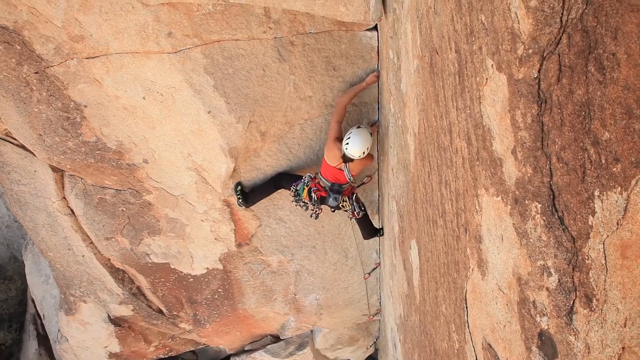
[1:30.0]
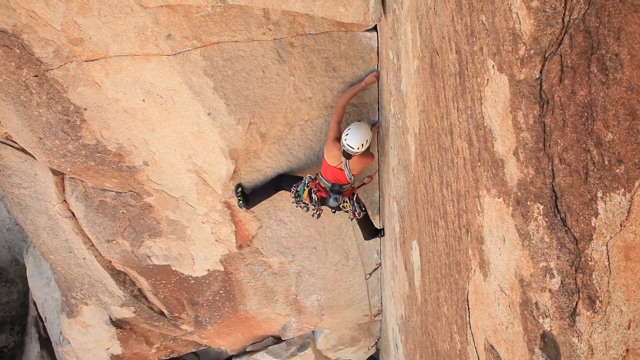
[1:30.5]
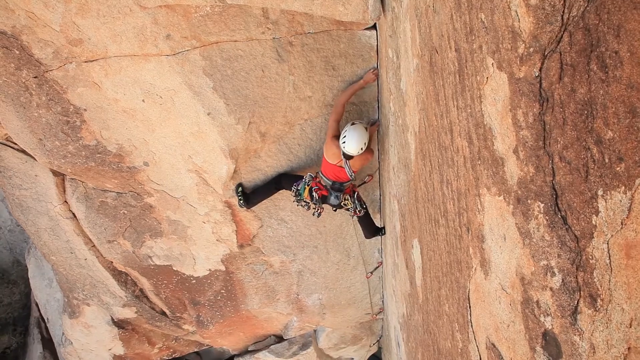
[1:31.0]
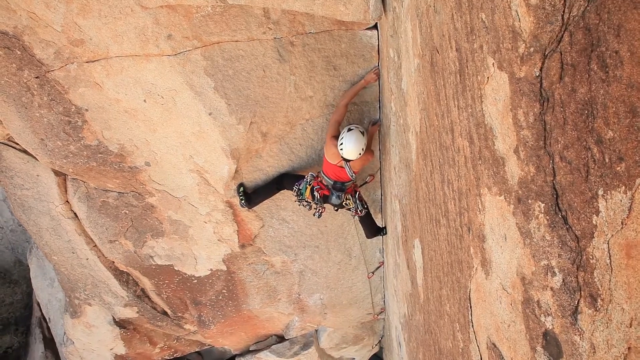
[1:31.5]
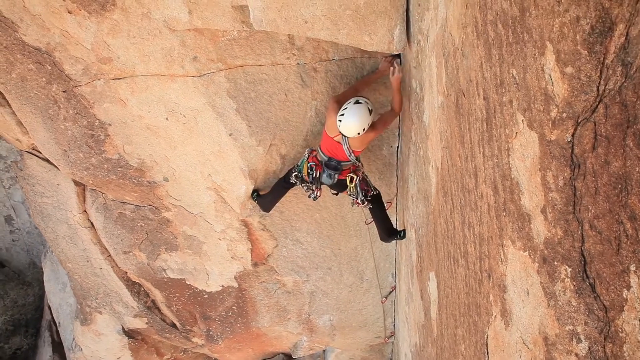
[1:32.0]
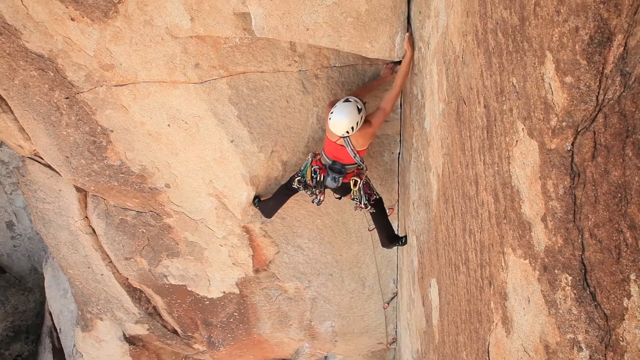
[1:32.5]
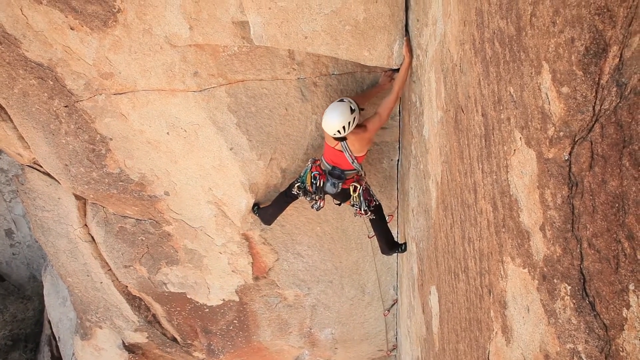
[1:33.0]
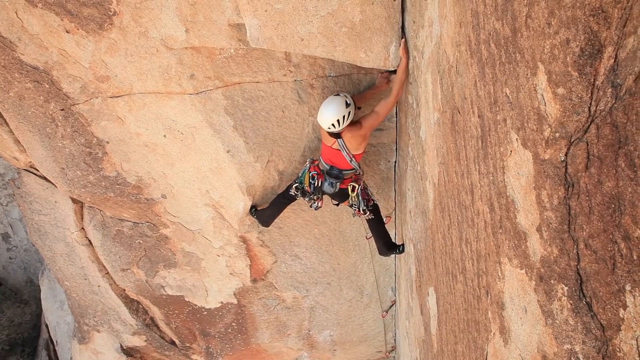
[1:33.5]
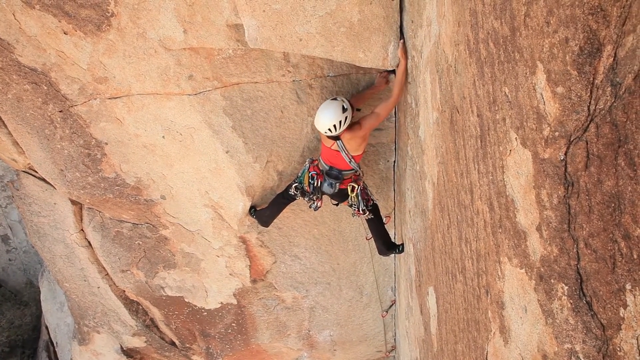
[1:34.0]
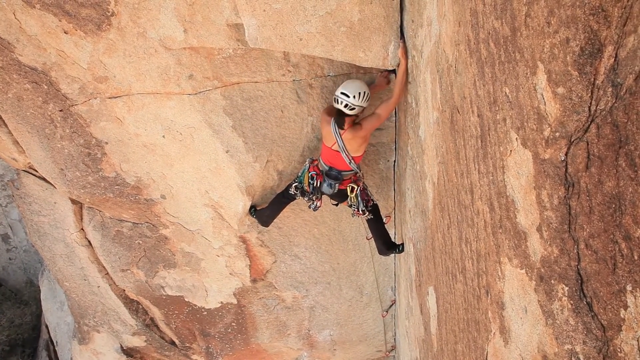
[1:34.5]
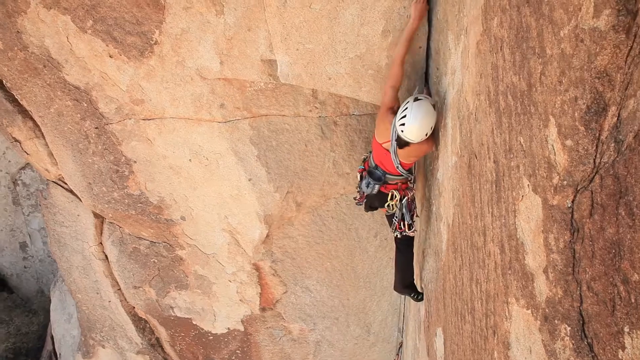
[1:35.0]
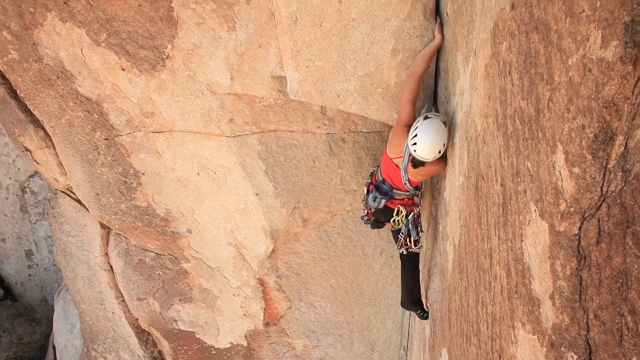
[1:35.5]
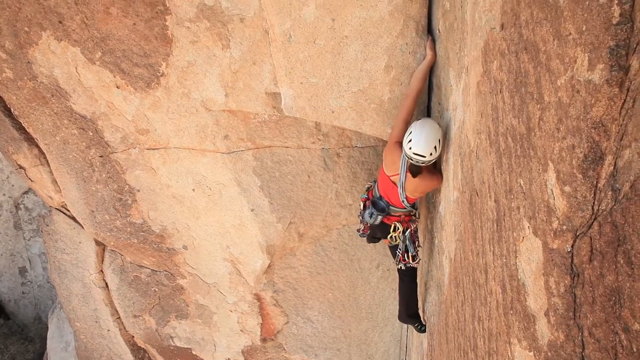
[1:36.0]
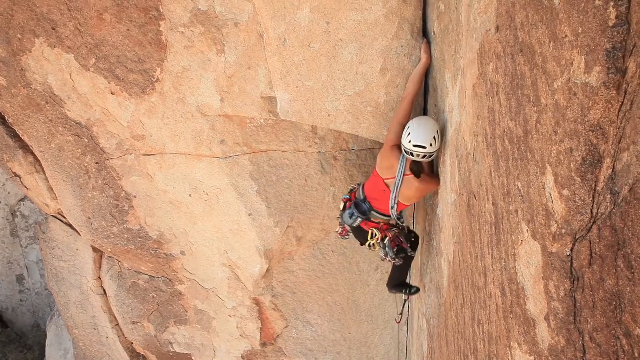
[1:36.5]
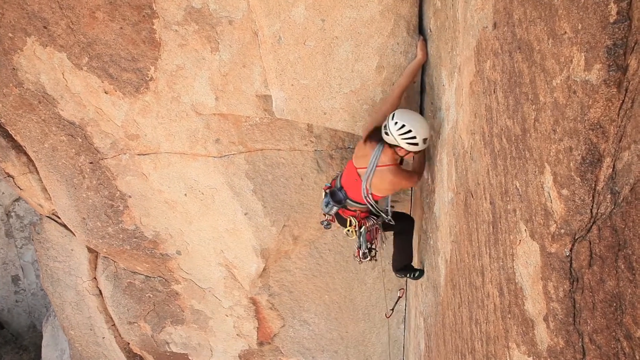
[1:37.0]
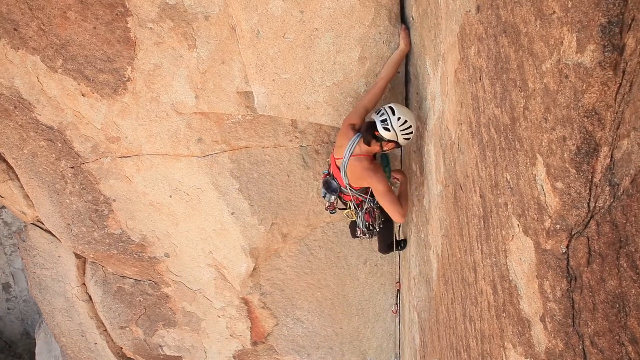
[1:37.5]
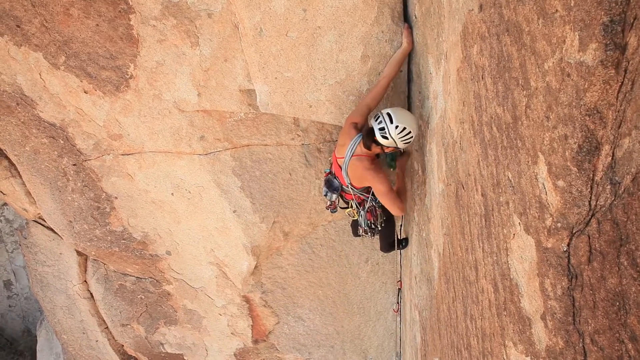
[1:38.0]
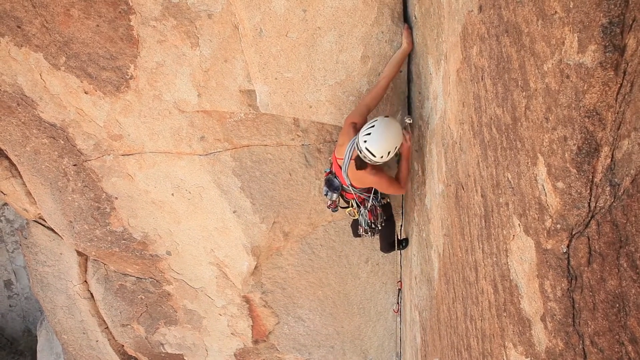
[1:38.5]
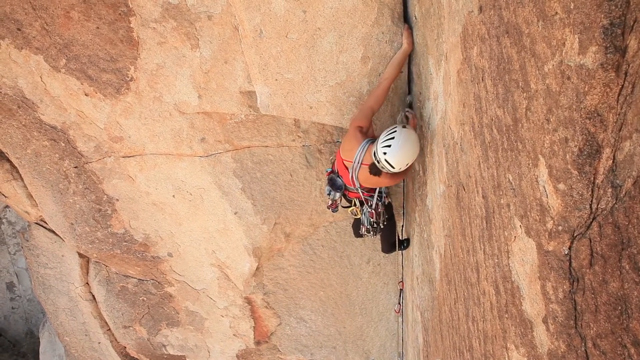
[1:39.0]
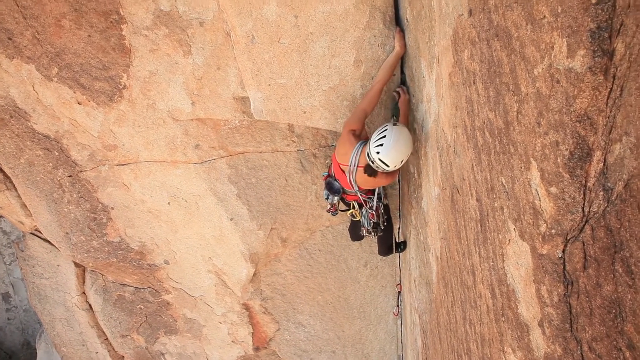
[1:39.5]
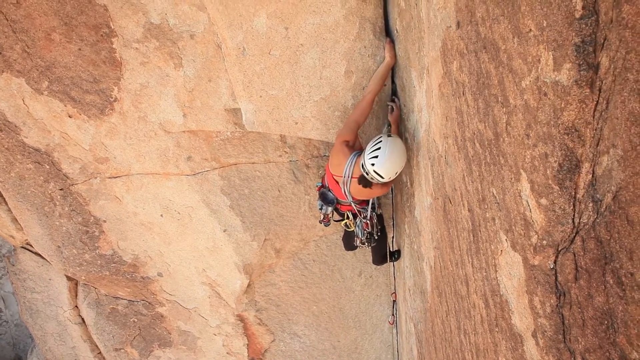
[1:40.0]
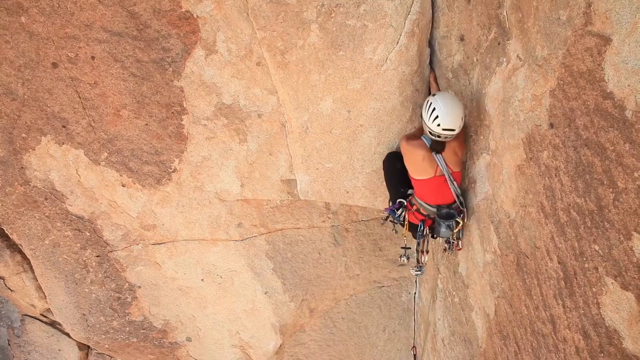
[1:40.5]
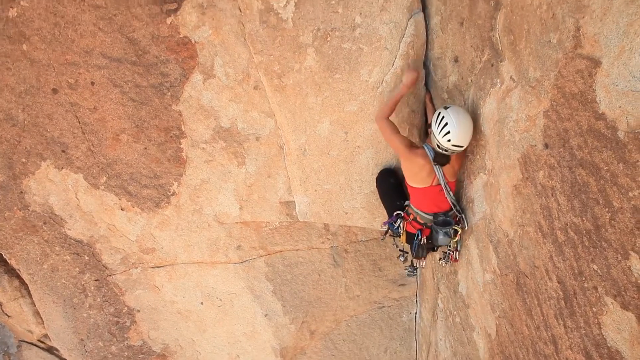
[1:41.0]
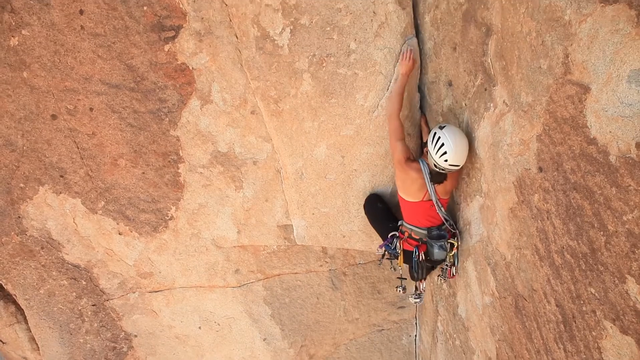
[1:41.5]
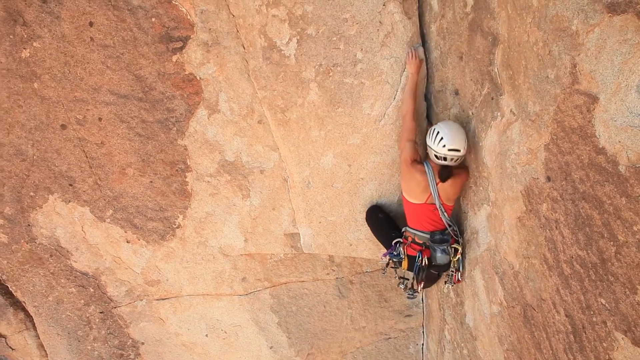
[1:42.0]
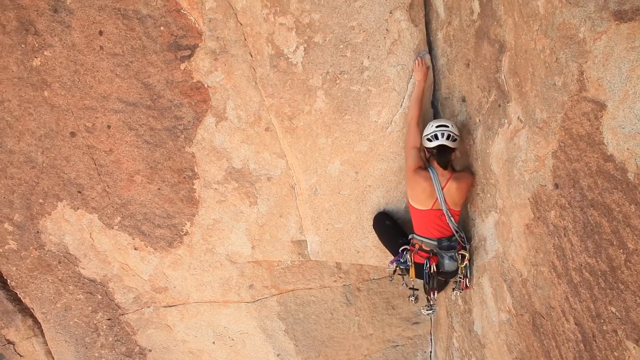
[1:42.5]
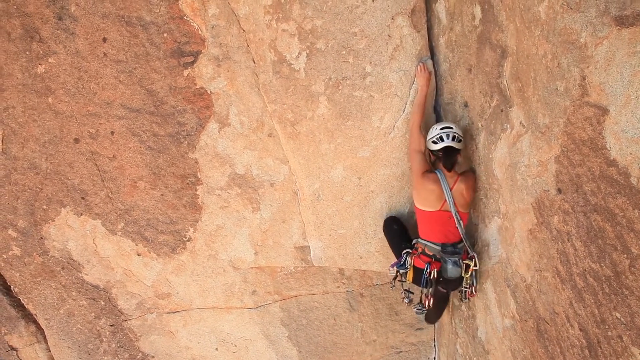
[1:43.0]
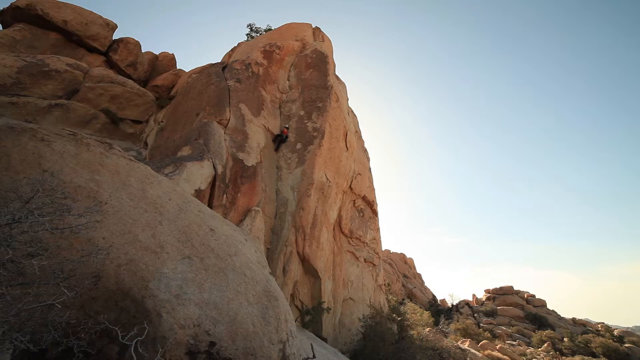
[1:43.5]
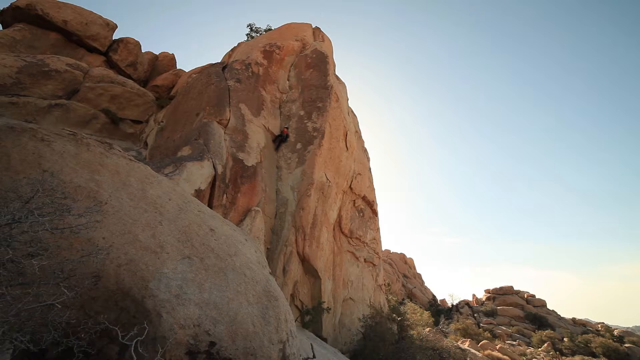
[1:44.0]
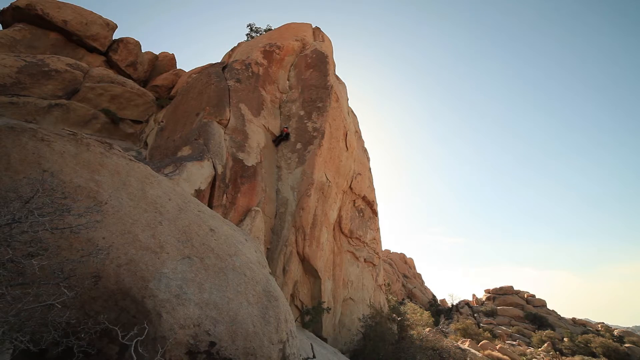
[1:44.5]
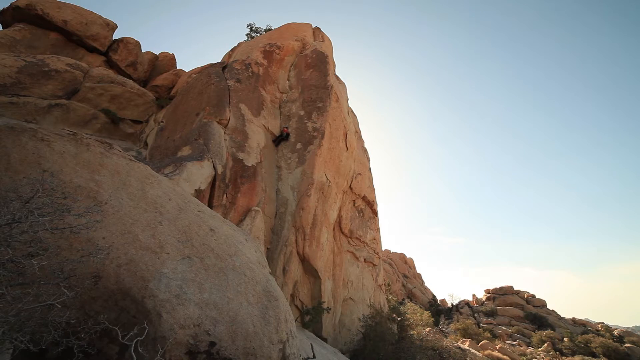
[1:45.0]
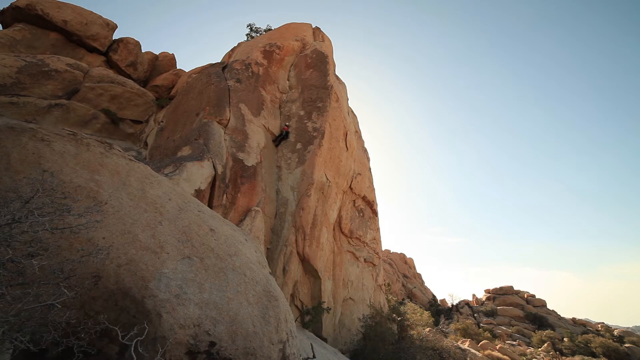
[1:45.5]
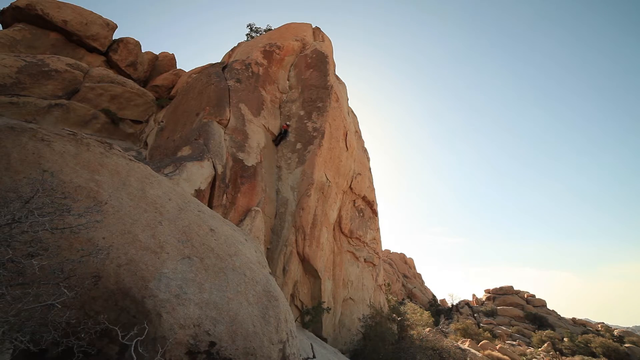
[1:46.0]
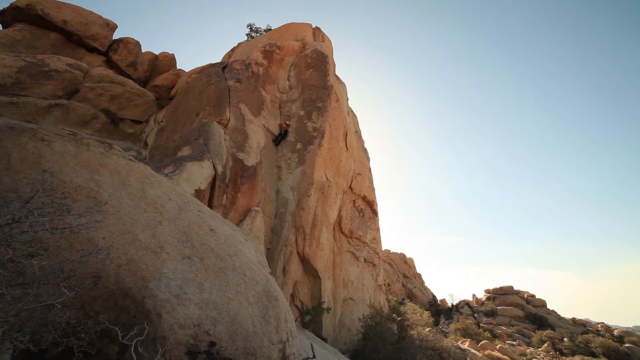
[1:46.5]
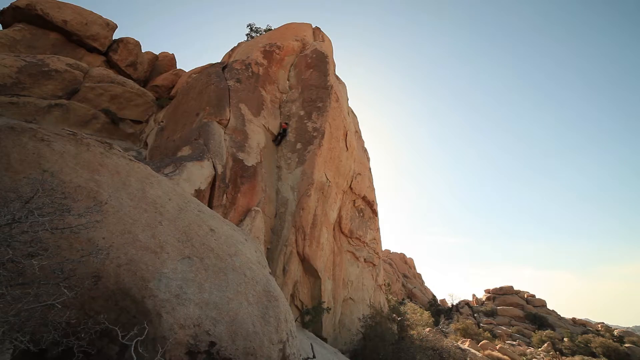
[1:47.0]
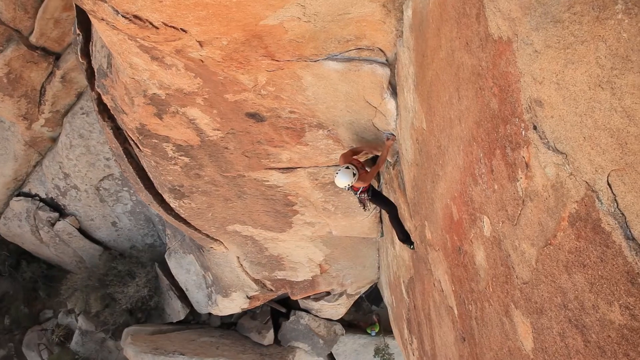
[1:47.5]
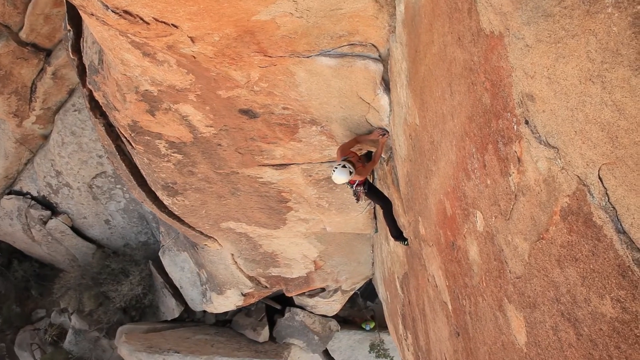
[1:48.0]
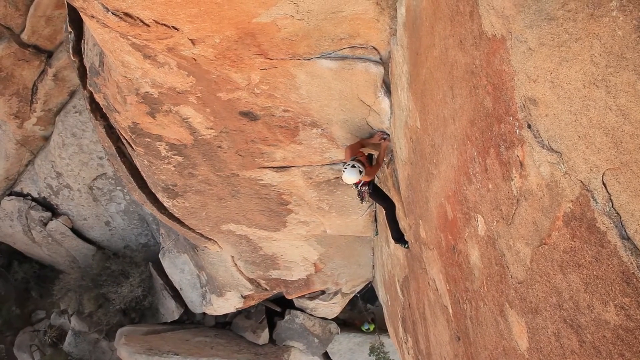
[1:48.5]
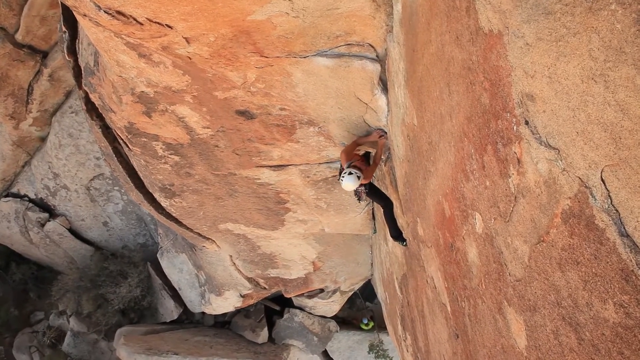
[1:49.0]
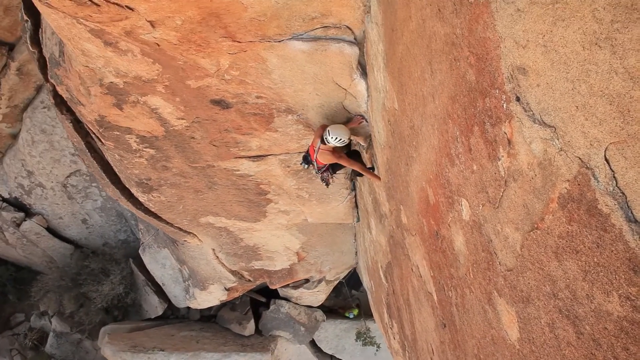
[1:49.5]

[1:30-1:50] A woman climbs up a rock and is very high up, almost to the top. She wears a white helmet, a pink top and black pants. Her feet are spread apart for a good grip on the rock, and she puts her hands in the creases to grip. She looks very experienced. It is daytime and the sun is shining. She slowly gets closer to the top but does not reach it.